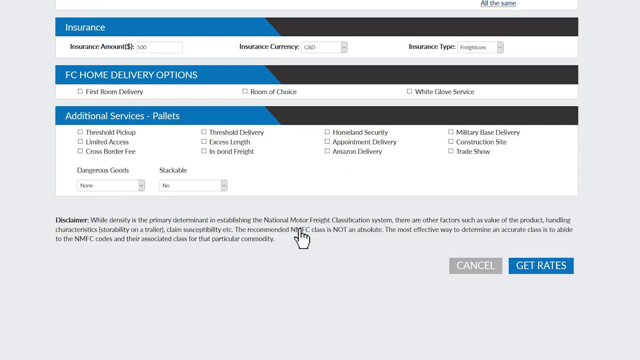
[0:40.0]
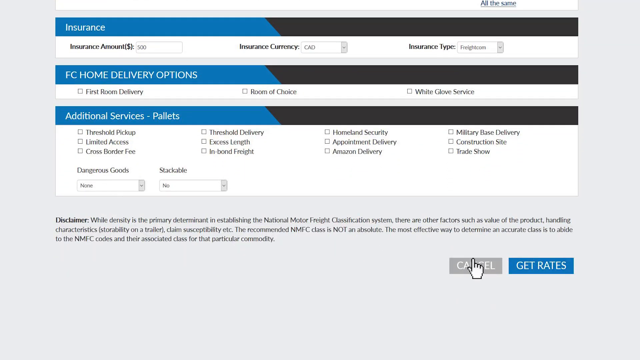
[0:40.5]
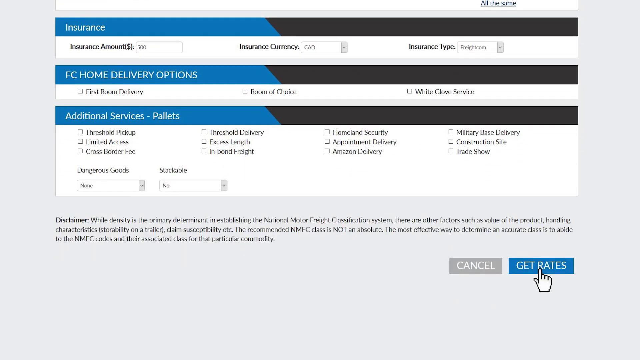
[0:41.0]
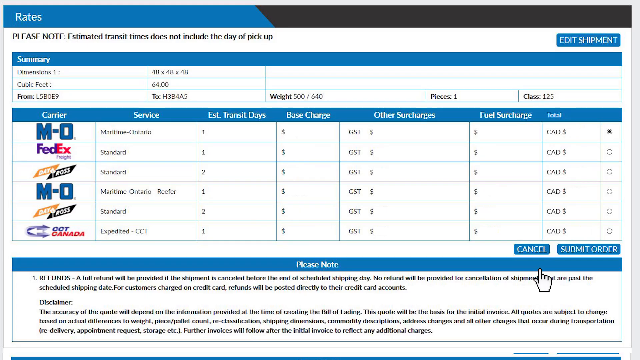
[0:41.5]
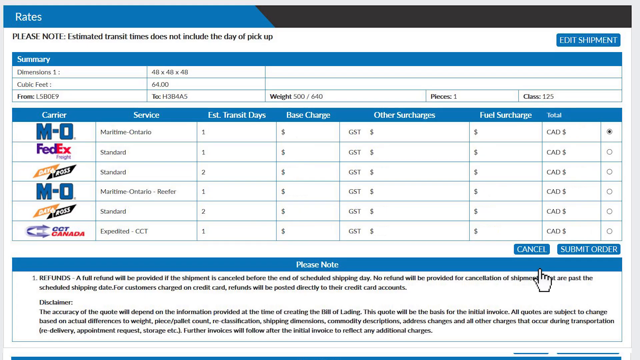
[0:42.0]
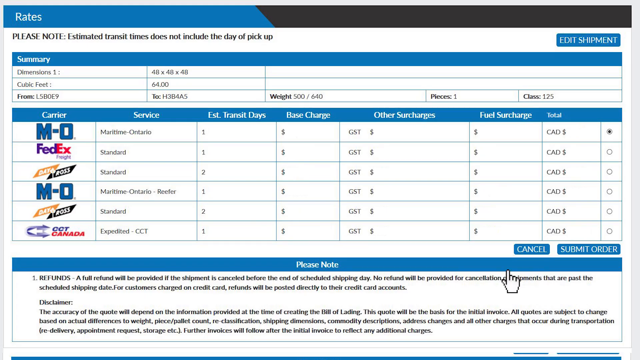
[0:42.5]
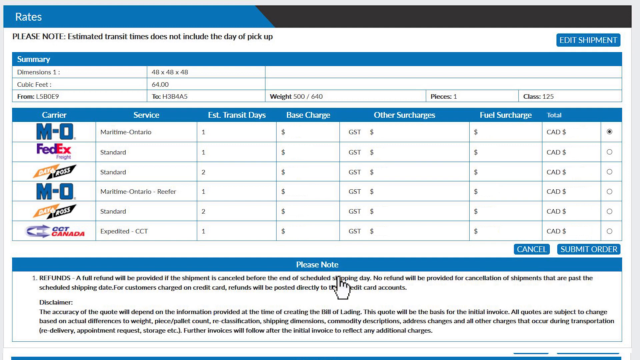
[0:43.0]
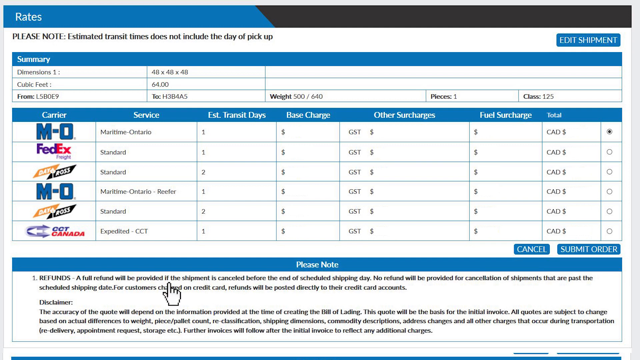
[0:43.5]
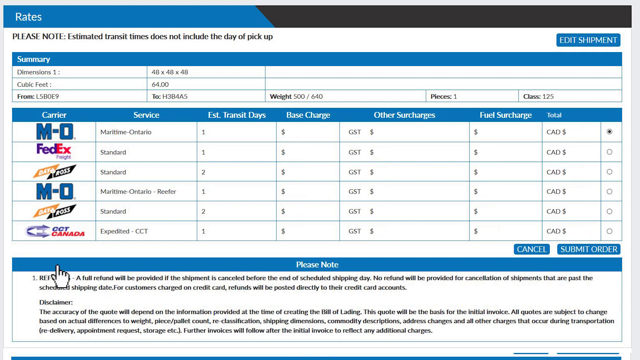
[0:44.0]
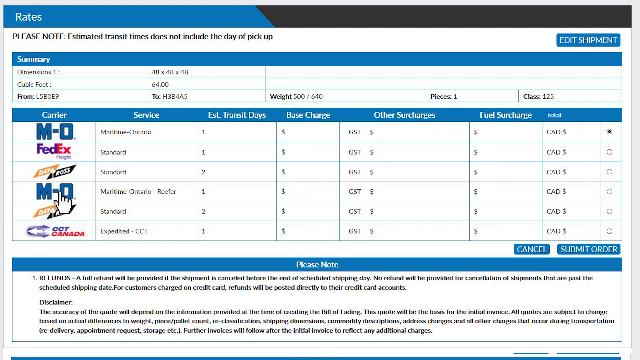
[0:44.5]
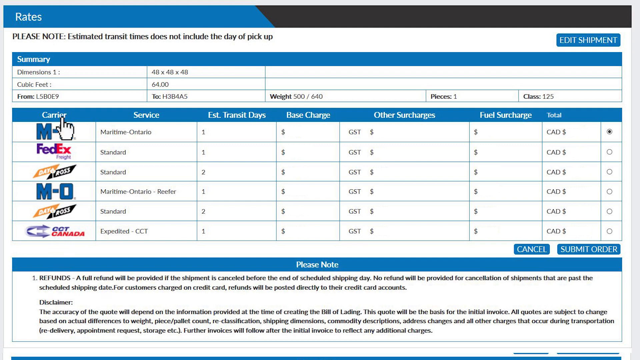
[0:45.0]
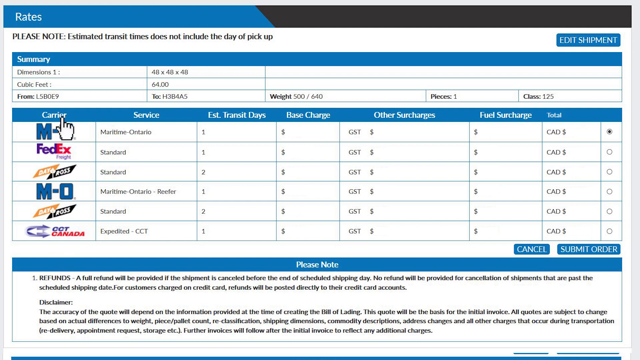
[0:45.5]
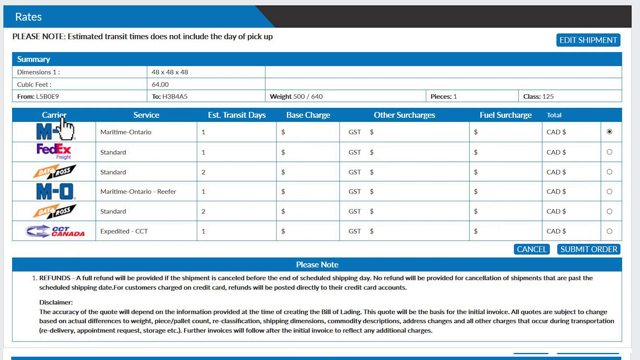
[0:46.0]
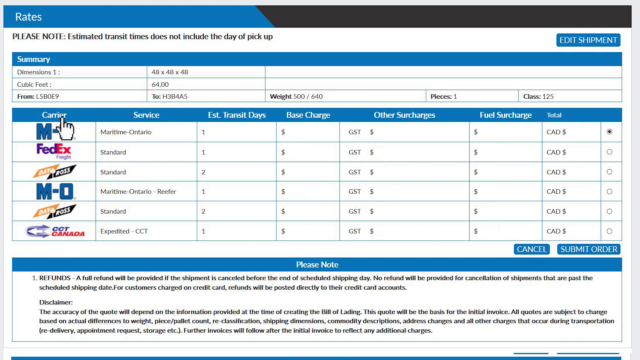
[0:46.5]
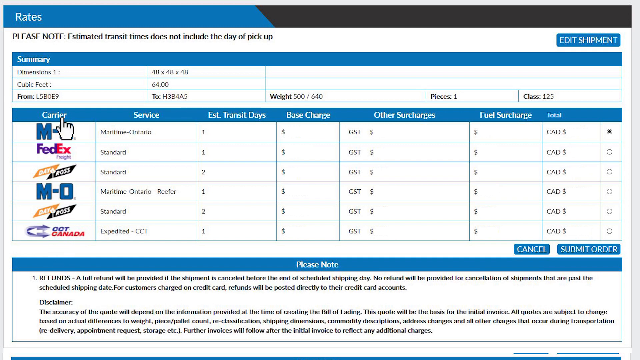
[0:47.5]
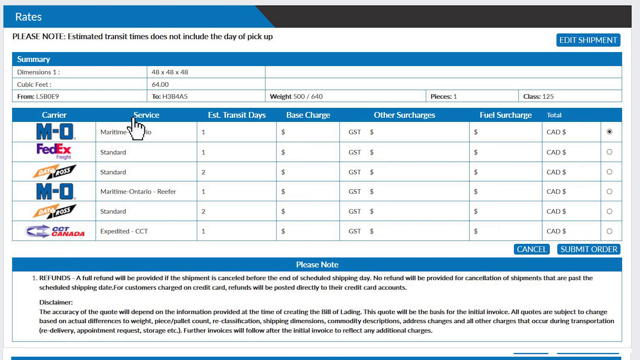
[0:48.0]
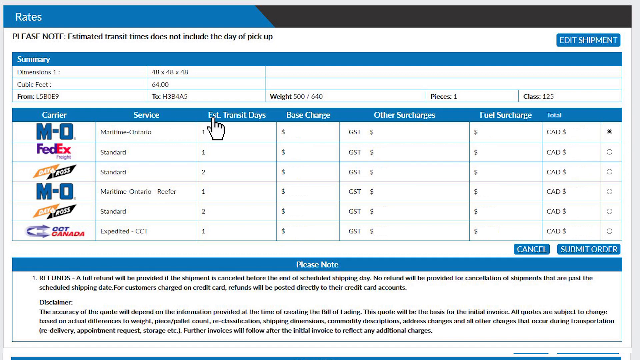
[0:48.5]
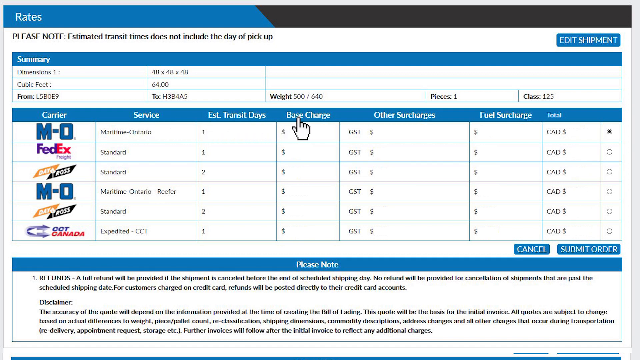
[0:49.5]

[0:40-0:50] A web page shows several categories to choose from. At the top it says "rates", with a note underneath. On the right it says "exit" or "edit shipment". Below that, "summary" appears in a long blue rectangular box, and under the summary are three categories with options to the right of them; one has a "weight" option, and the rest is too small to read. Beneath the summary is another large box with a long blue bar at the top, with column titles like "carrier", "service", "estimated transit days", "transit days", "base charge", "other surcharges", another "surcharge", and the "total". There are six different carriers, including "FedEx" and "M-O", each with one service choice. At the end of the rows are six little circles for selecting a carrier. Under the carrier box is a long blue bar that says "please note" with "information about refunds", along with "cancel" and "submit order" buttons. The hand-shaped arrow moves across the pages, pointing out different items. The next page shows the "insurance" and "FC home delivery" areas, with the hand arrow moving across them.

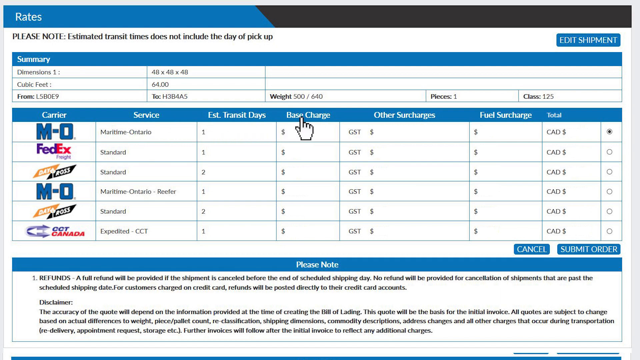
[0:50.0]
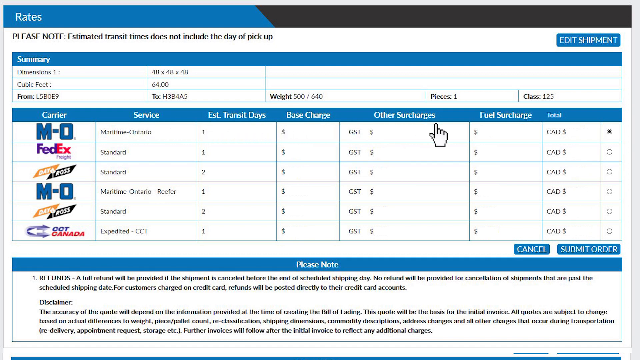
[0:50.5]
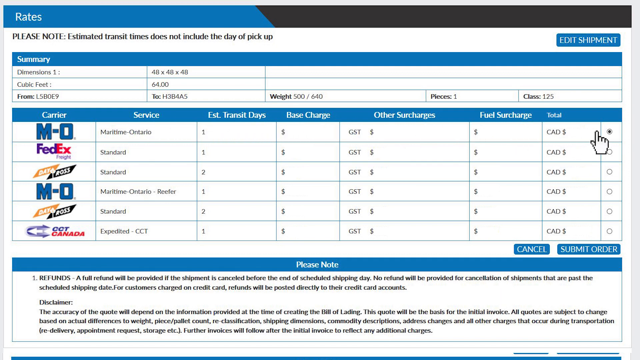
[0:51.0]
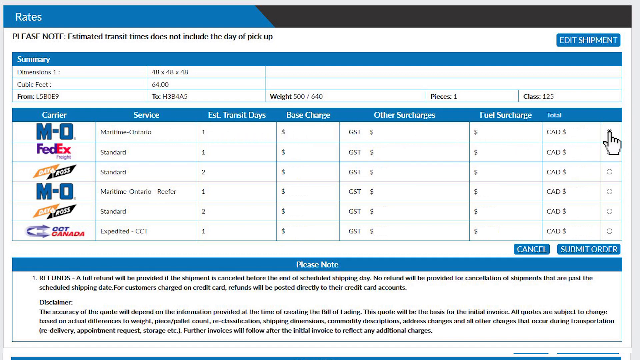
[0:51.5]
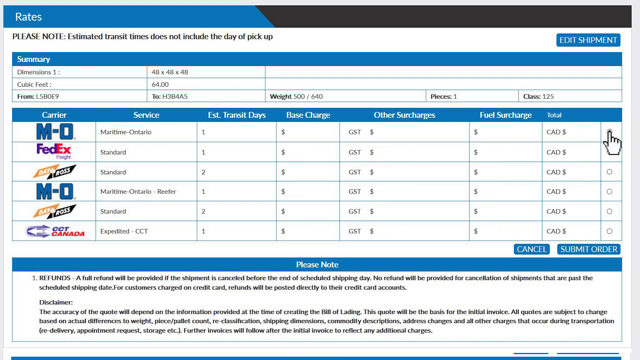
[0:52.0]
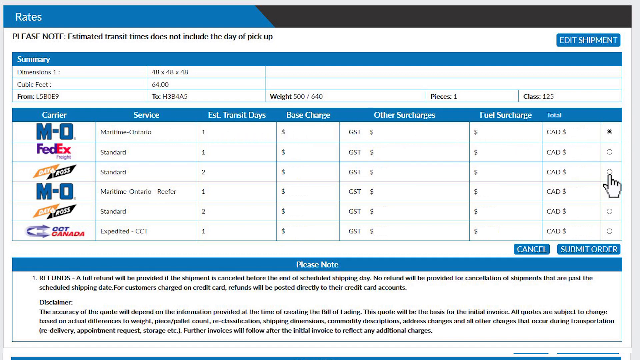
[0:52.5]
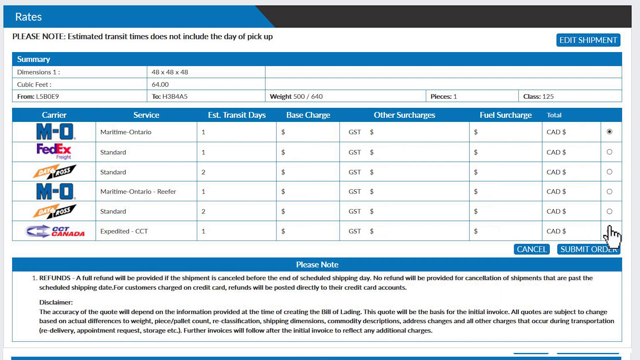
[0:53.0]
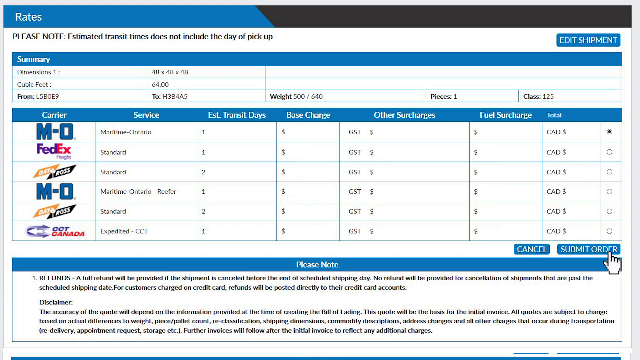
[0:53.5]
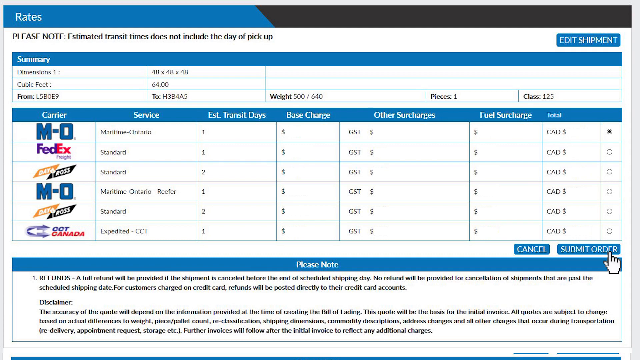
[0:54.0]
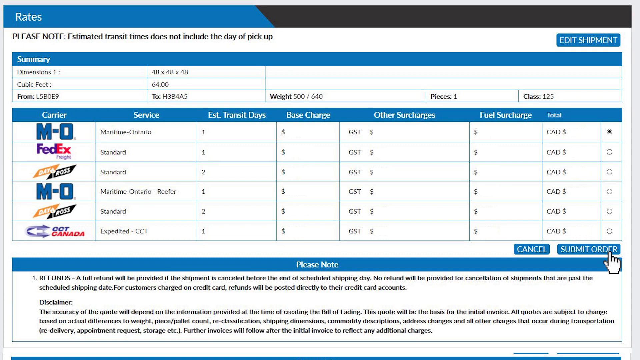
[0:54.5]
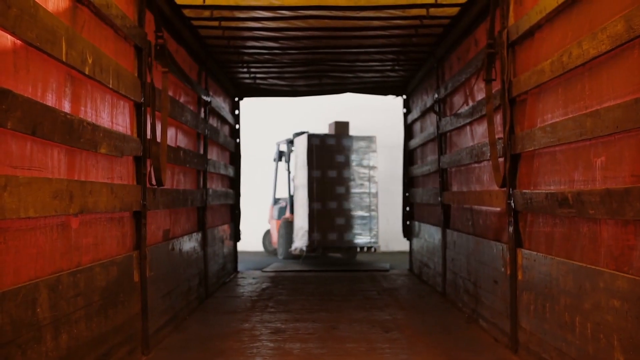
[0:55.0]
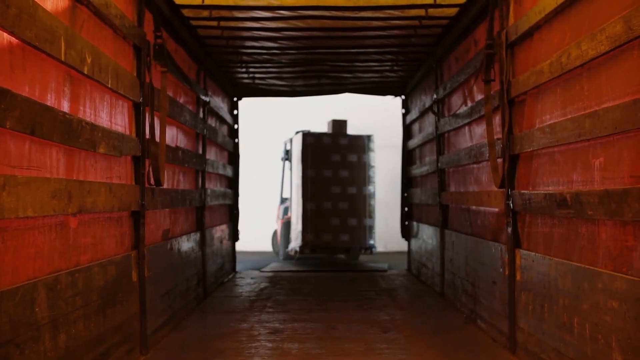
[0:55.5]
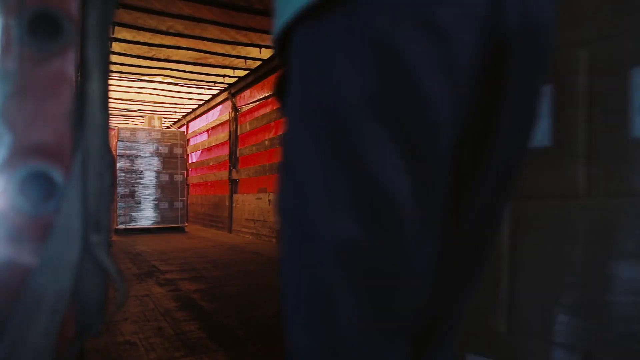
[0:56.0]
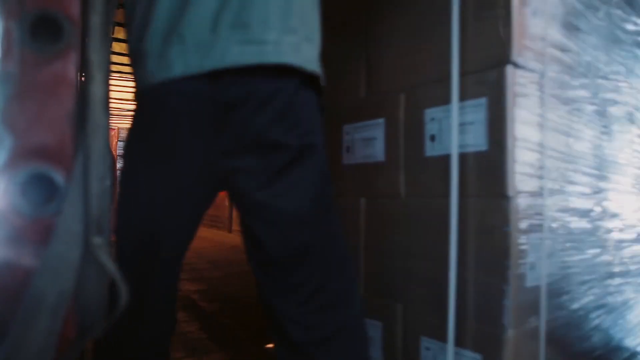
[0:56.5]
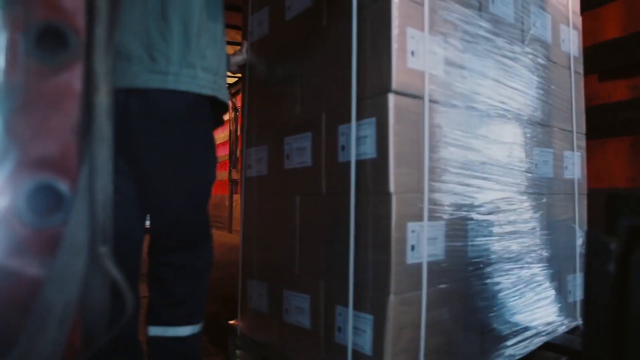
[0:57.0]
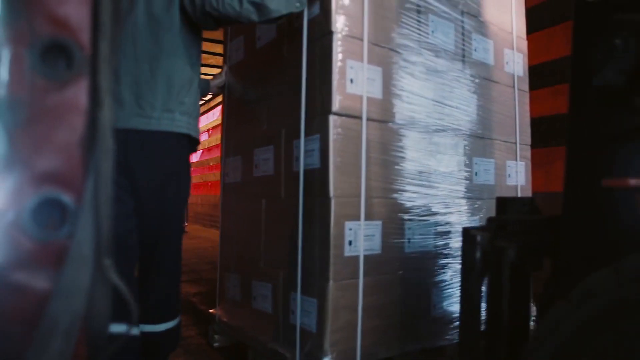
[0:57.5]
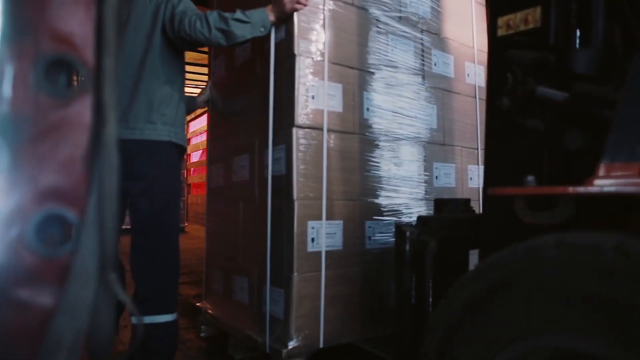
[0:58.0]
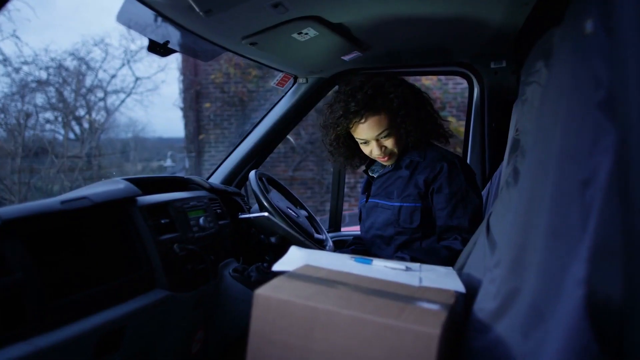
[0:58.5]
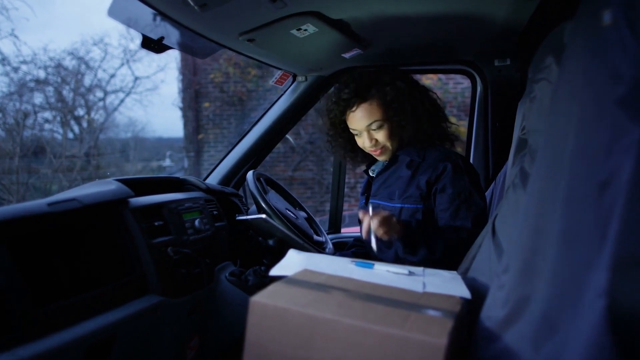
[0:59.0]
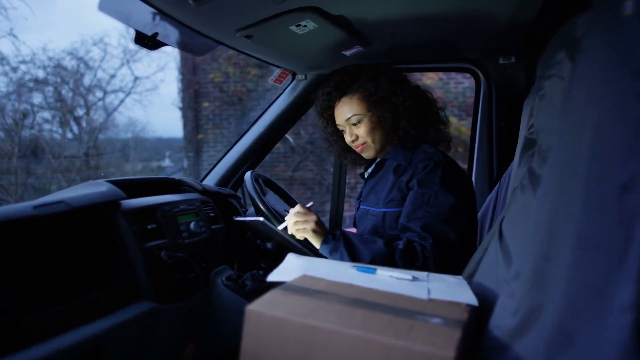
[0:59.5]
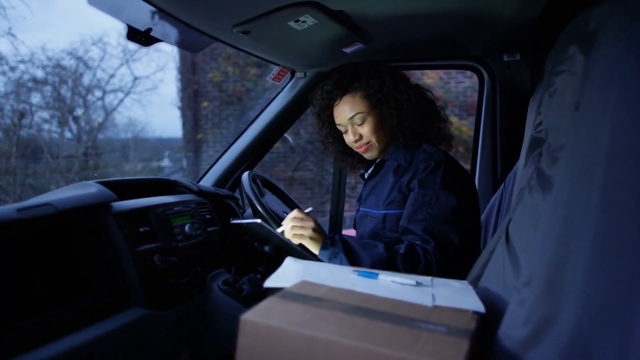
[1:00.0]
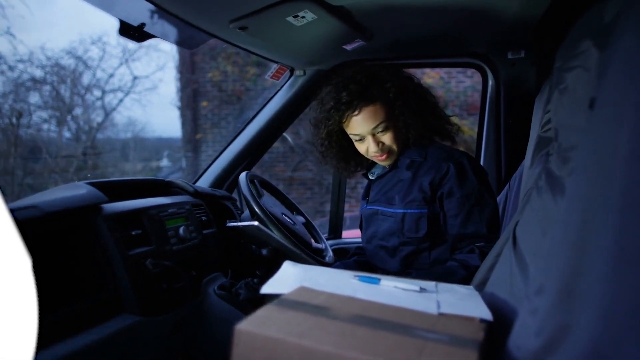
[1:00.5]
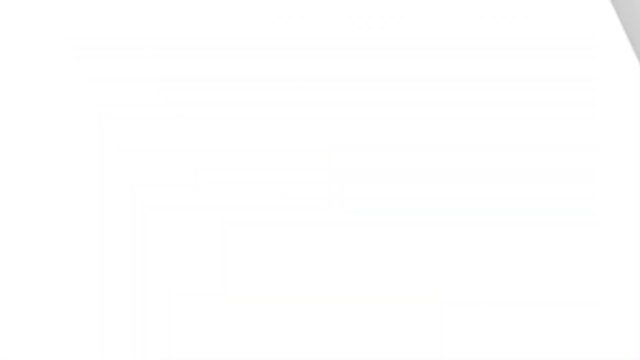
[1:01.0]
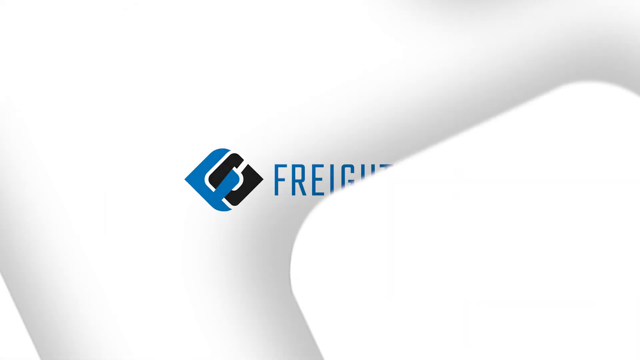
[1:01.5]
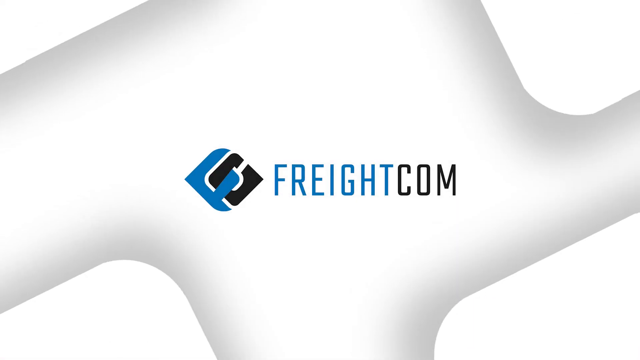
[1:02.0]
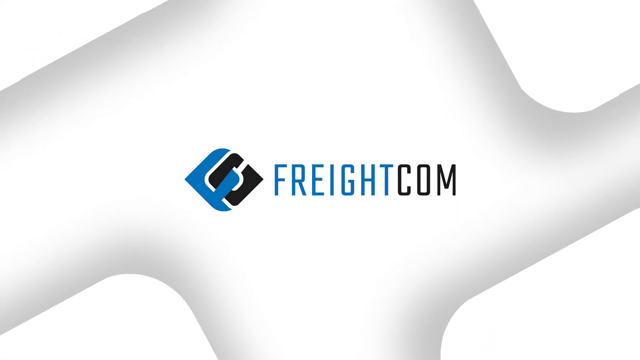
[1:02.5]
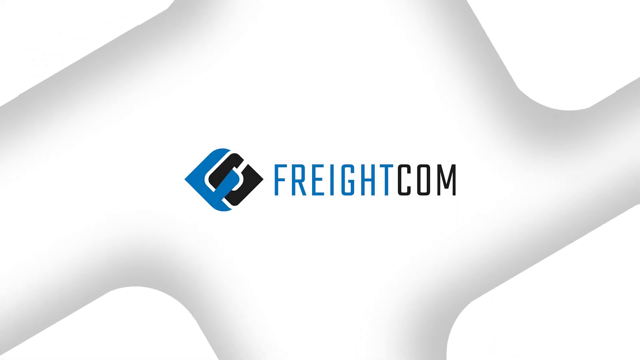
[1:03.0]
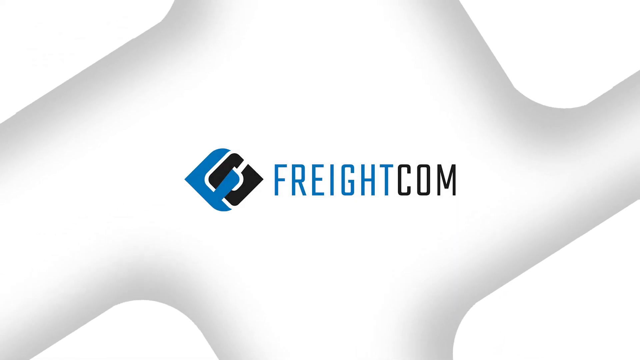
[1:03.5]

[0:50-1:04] A web page with various boxes is shown, and then the video switches to footage of real people. A man moves a large object of items to be shipped across a warehouse floor; he wears dark navy blue pants with a light blue stripe across the bottom and a gray jacket. Next, a woman sits in a van, smiling, holding a pen and writing something on a glowing digital screen. To her left are what looks like a box and a large envelope or paper with a pen on top. Outside, an older brick building and trees with no leaves are visible, suggesting possibly winter or autumn; she is wearing a jacket. The video then switches to the logo and the name Freightcom.